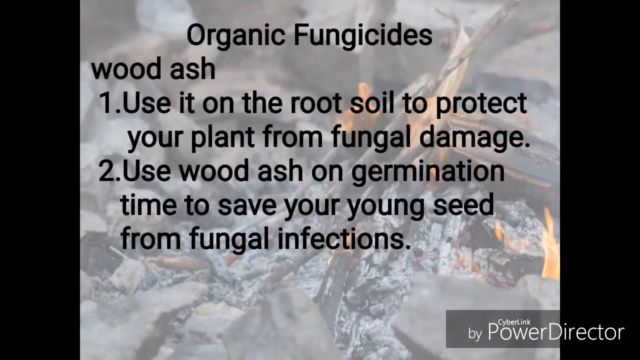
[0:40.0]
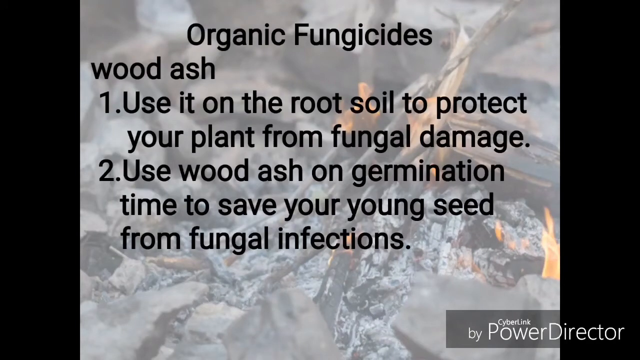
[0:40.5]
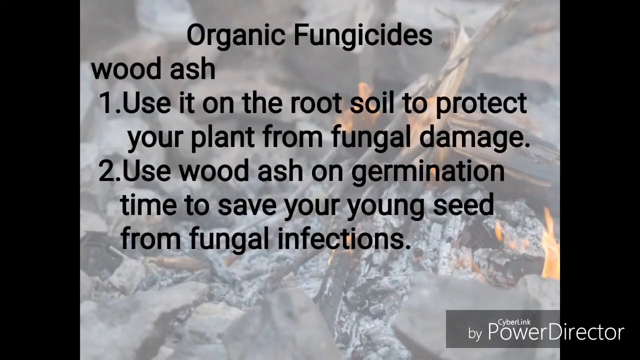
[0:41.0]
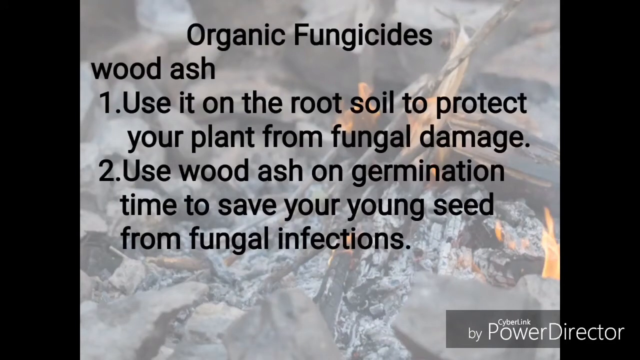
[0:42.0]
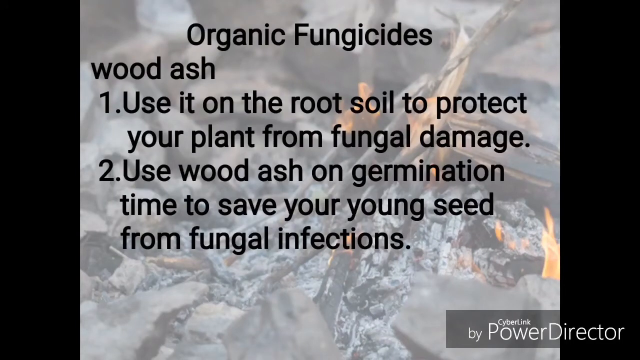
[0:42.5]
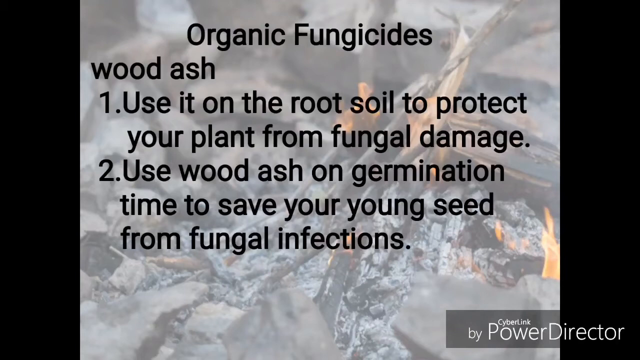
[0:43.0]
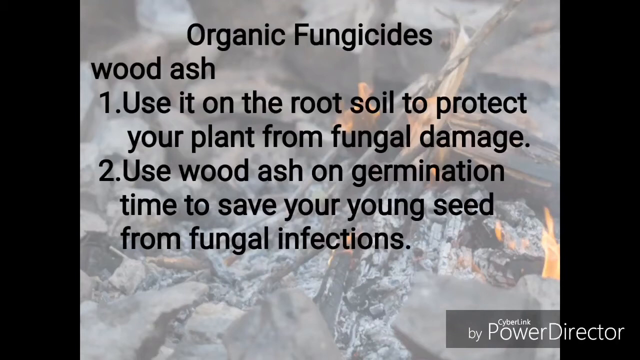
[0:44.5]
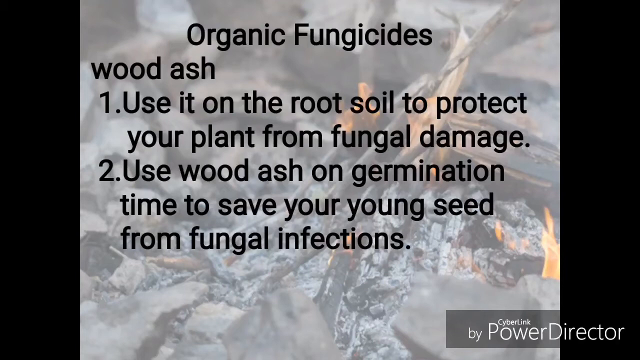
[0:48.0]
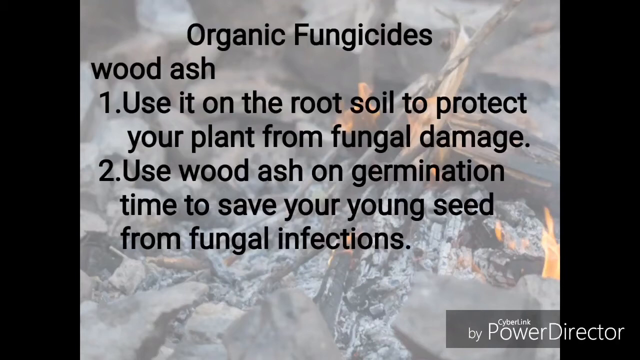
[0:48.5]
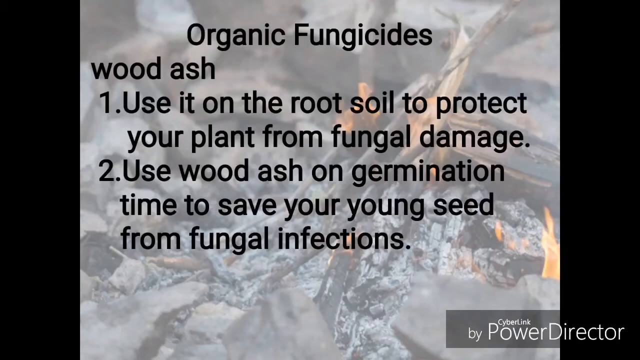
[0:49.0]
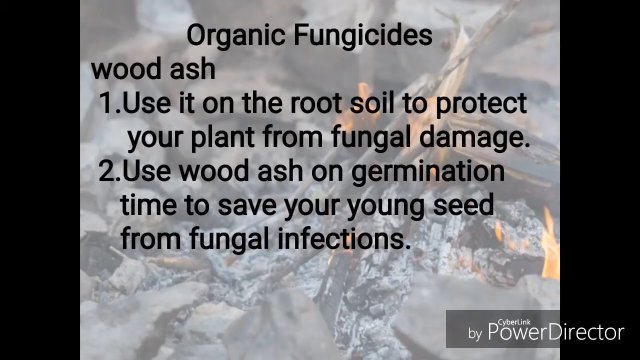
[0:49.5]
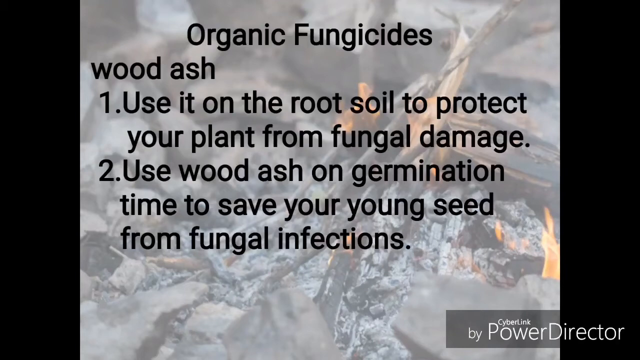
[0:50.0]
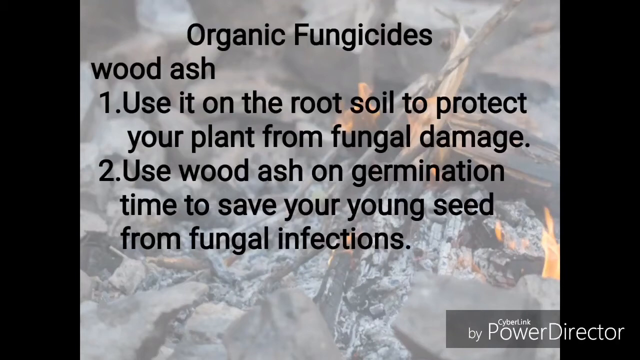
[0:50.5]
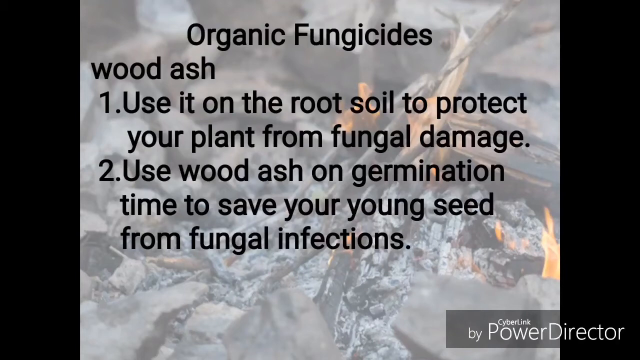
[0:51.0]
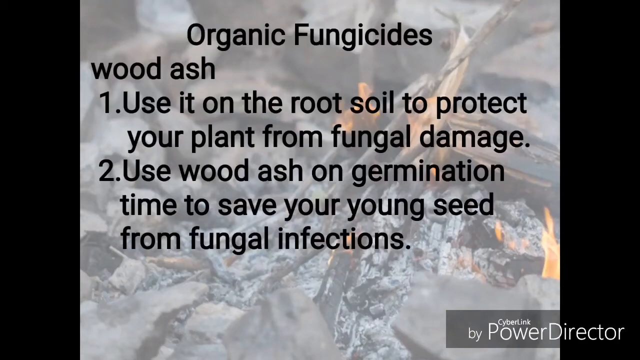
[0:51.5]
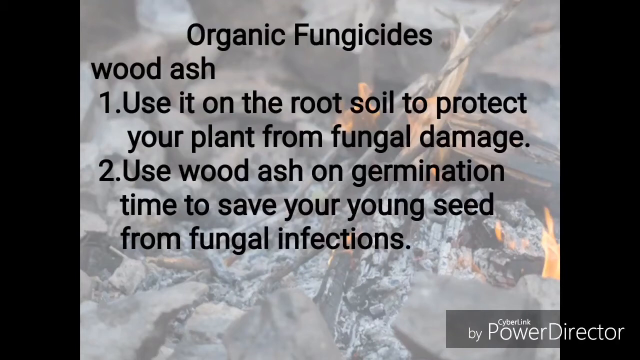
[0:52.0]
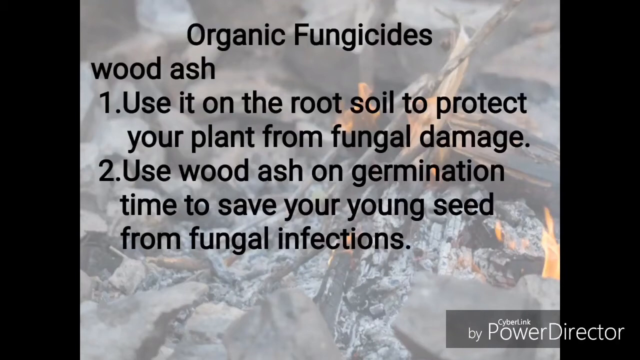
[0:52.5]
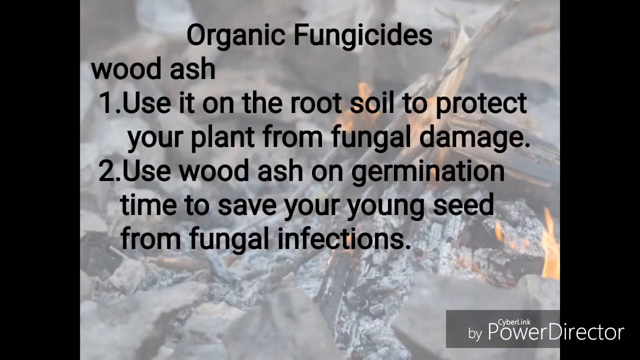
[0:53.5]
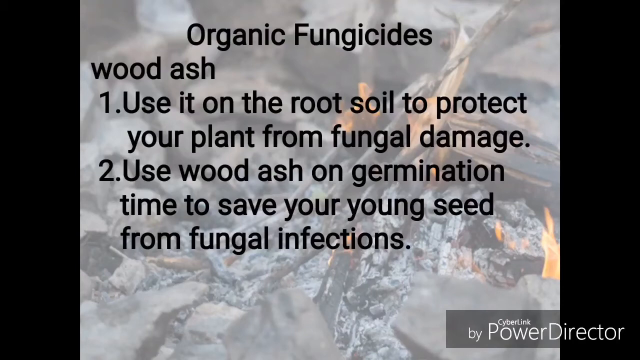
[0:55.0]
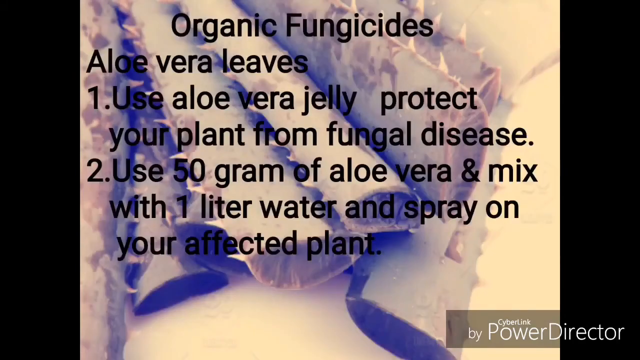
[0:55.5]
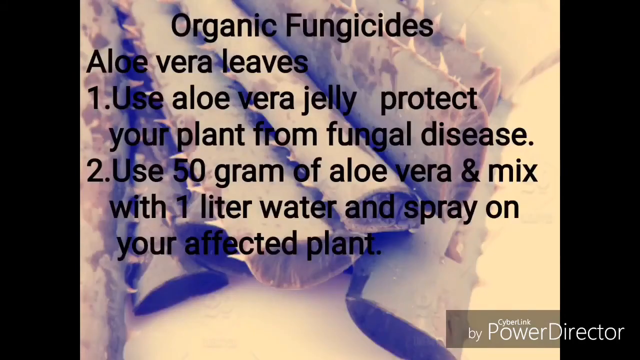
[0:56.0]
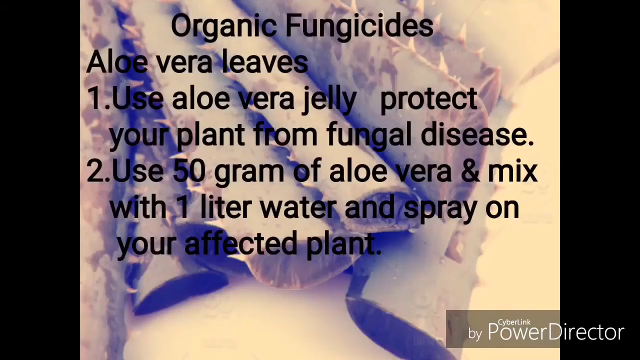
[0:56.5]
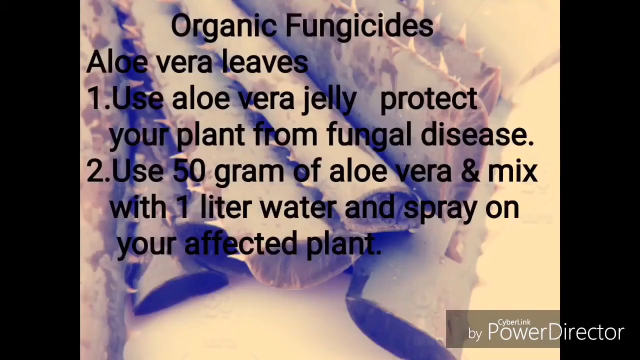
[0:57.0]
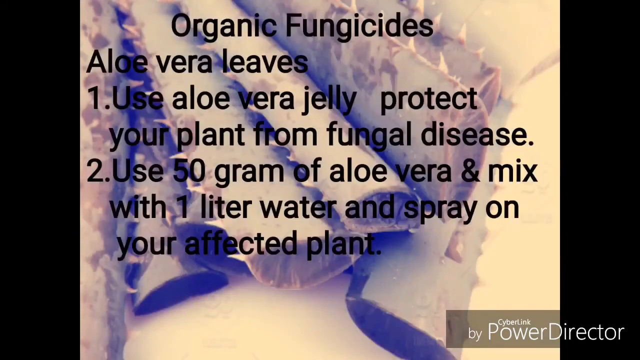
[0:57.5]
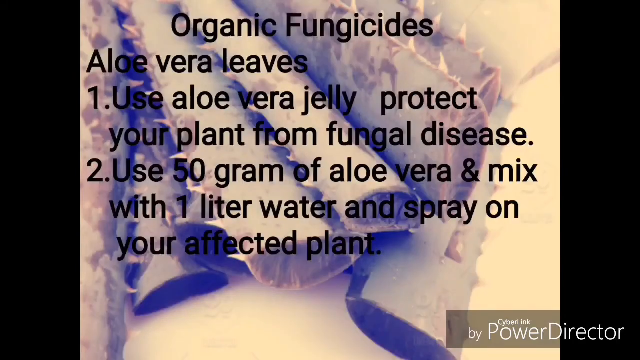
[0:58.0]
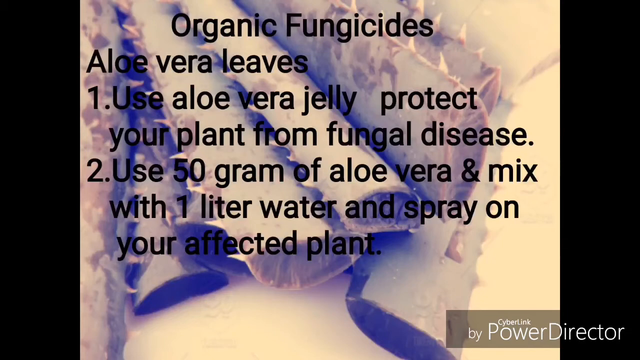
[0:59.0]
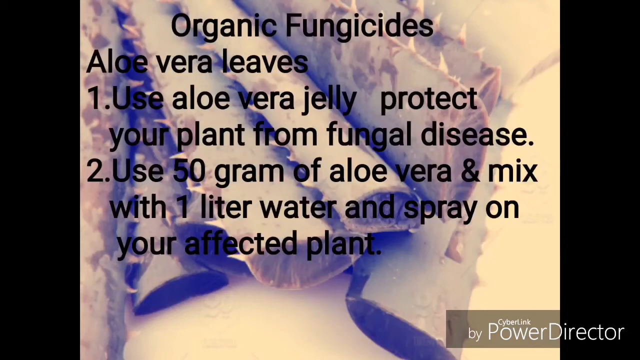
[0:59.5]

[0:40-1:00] The image remains on the same section for around 20 seconds, then changes to a faint background that looks like a zoomed-in view of burning wood. Over it is text reading "organic fungicides aloe vera leaves", followed by "1 use aloe vera jelly protects your plant from fungal disease" and "2 use 50 gram of aloe vera and mix with 1 litre water and spray on your affected plant". All the text is in the same bold black font. The heading is in the upper middle centre, and points 1 and 2 are on the left-hand side of the screen. A few lines at the bottom are blank, so the faded image of the sticks and fire can be seen in the background.